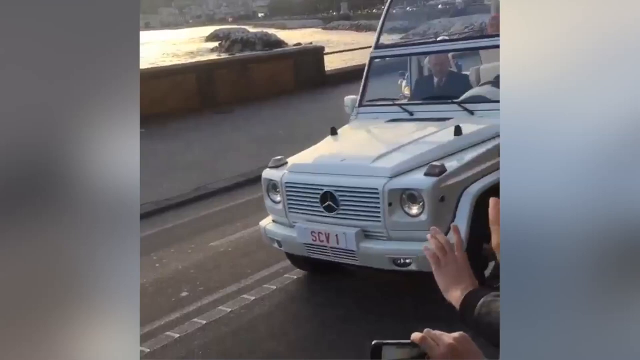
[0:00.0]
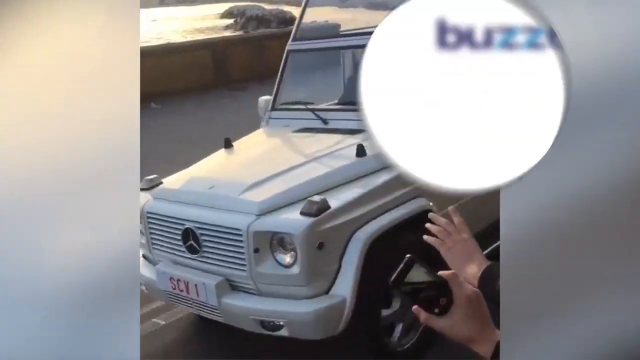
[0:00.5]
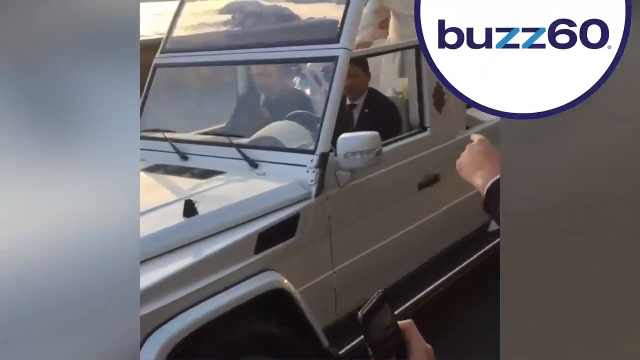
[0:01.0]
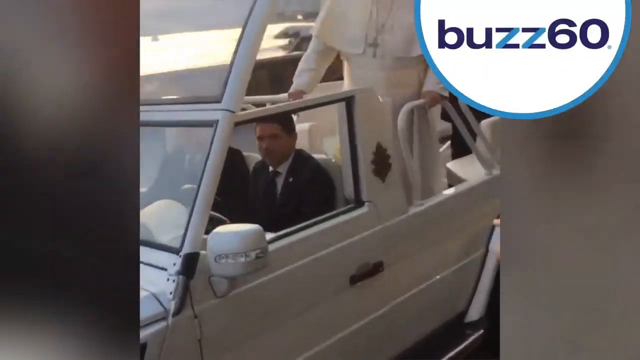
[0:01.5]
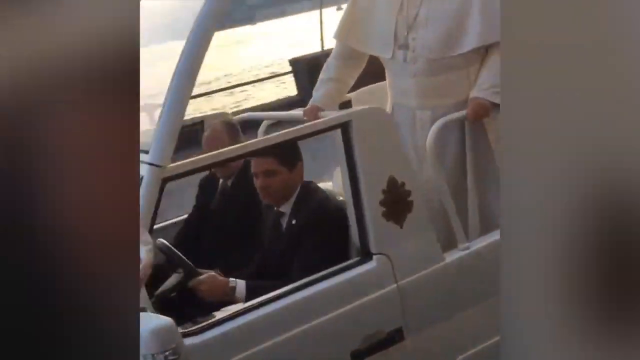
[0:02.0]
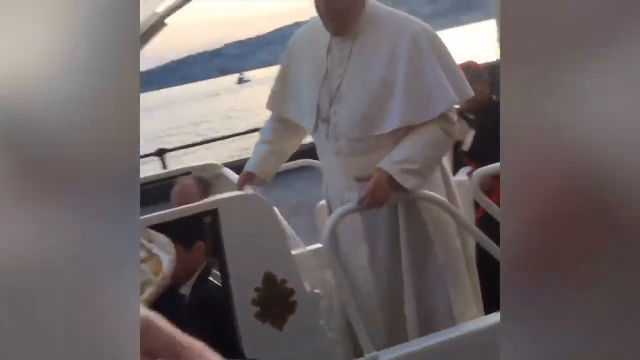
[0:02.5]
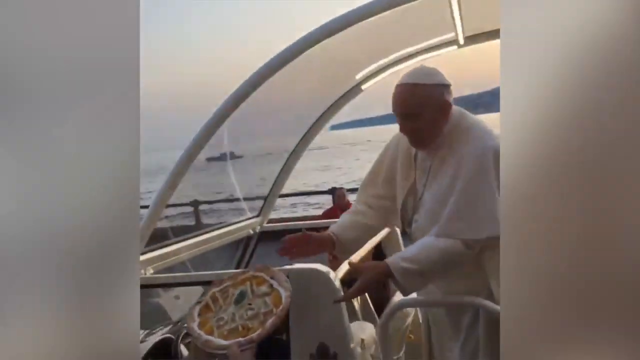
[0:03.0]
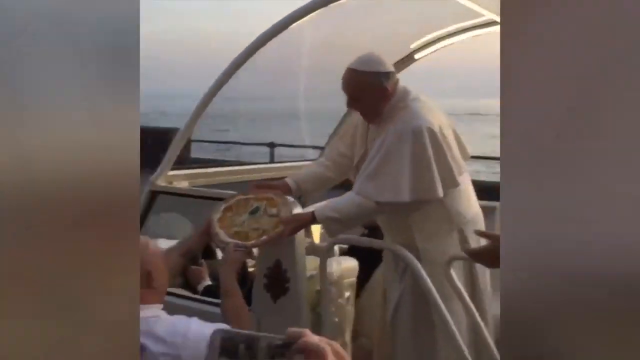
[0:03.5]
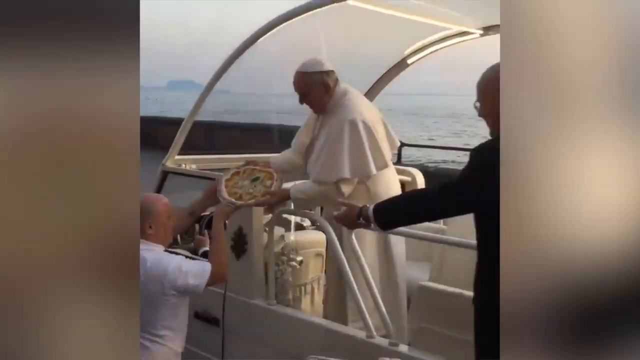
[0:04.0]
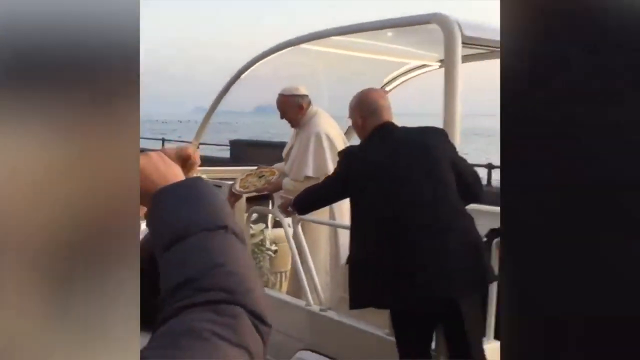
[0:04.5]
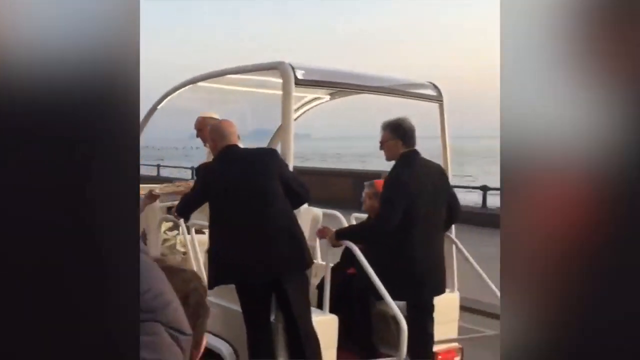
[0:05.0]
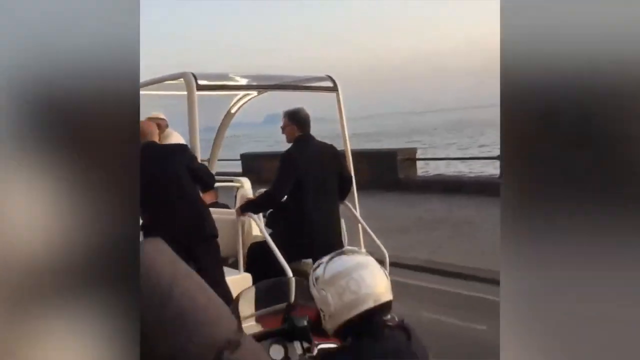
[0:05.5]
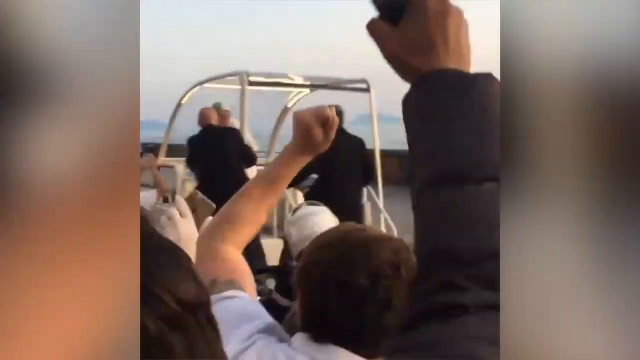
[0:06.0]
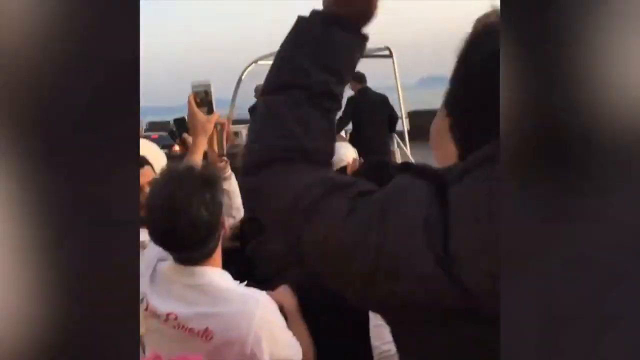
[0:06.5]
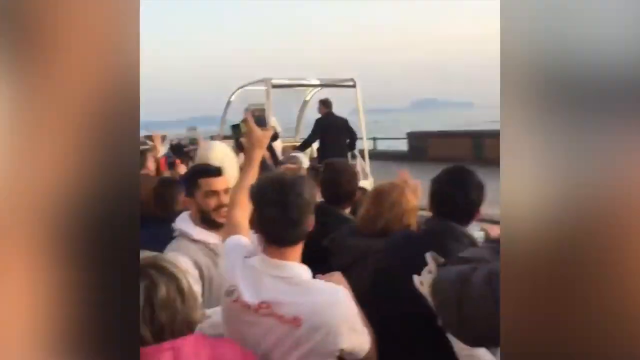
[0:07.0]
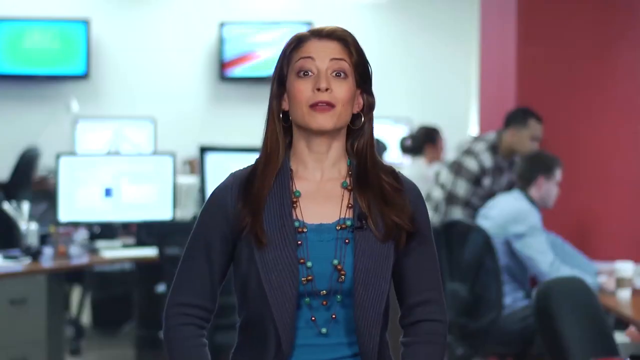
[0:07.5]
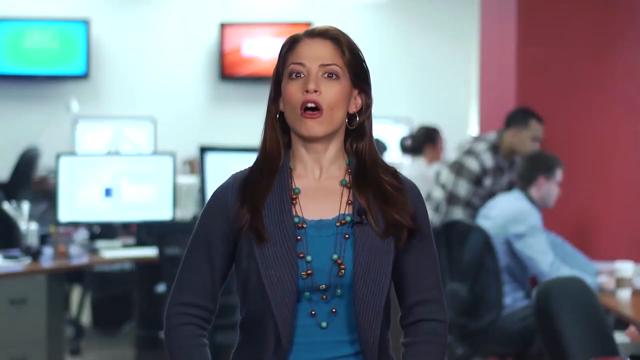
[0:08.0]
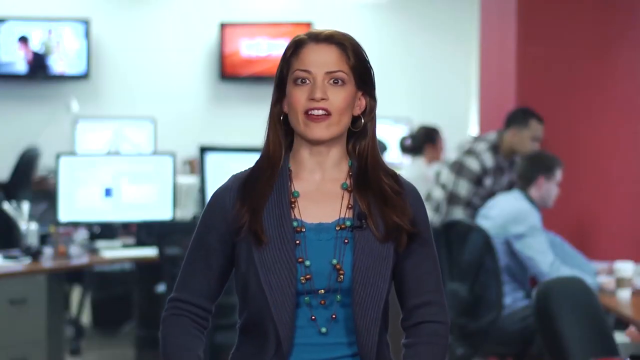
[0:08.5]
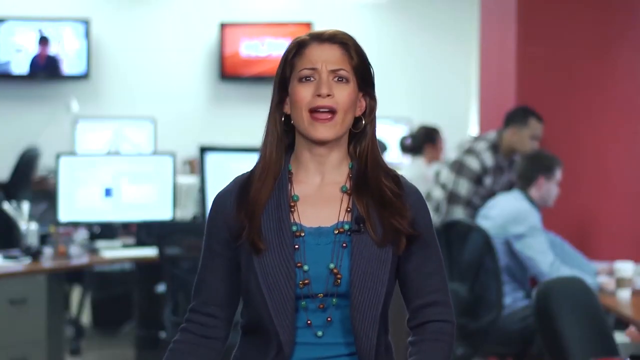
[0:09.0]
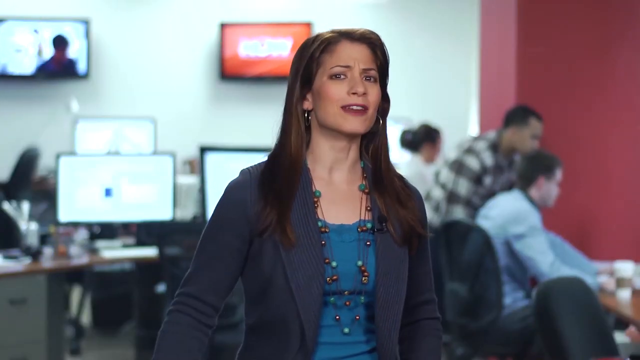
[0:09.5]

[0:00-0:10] A white Mercedes G63 drives on the road carrying passengers, among them the Pope, who wears a white Franciscan church dress. Two people sit in the front, both in black suits and white shirts. A person gives the Pope a pizza. Two other passengers, both males, are in the back, wearing black suits with white shirts underneath. A crowd on the streets cheers at the Pope, and a group of people stands by the road. Another scene shows a female wearing a red coat with a green dress underneath and a large necklace; two different scenes appear in this picture.